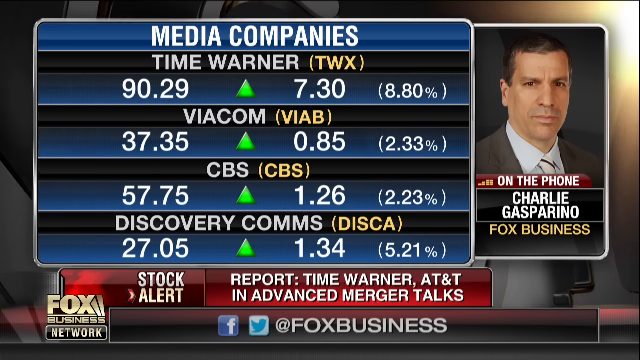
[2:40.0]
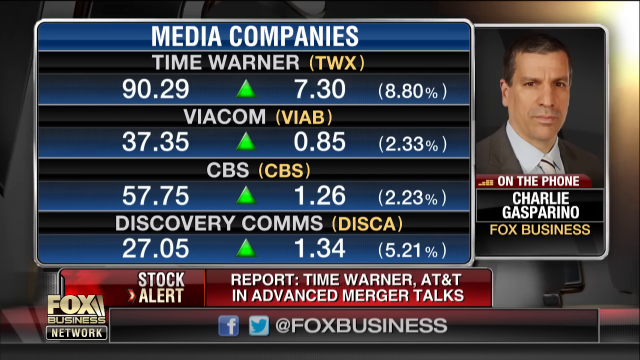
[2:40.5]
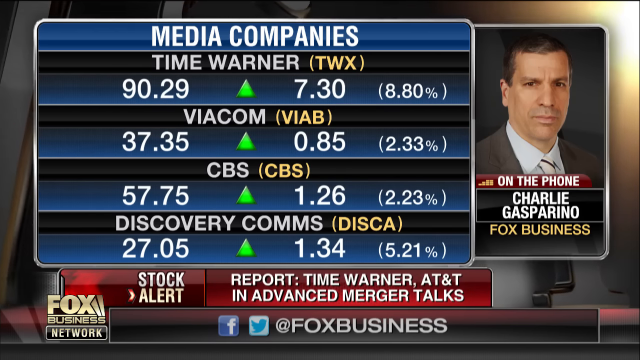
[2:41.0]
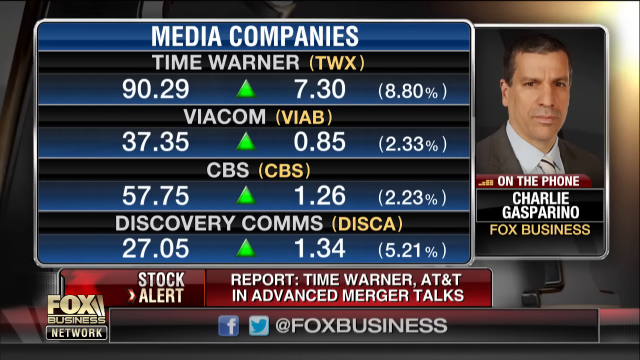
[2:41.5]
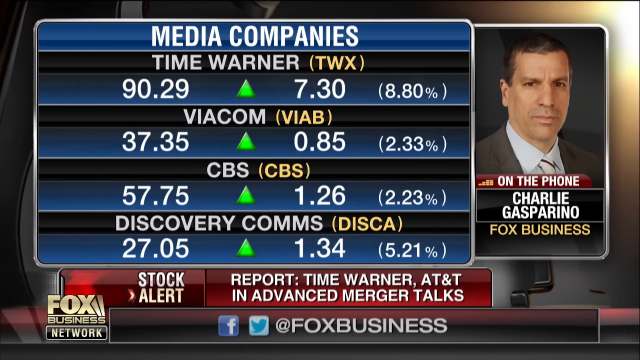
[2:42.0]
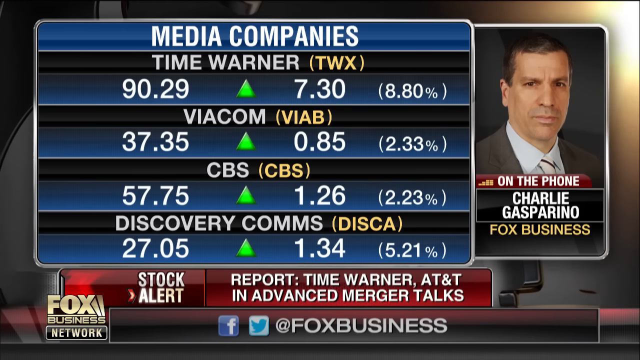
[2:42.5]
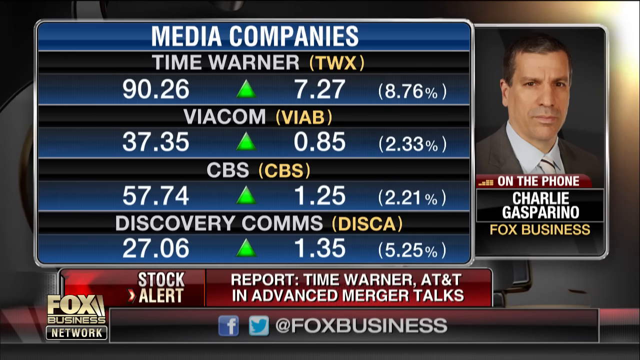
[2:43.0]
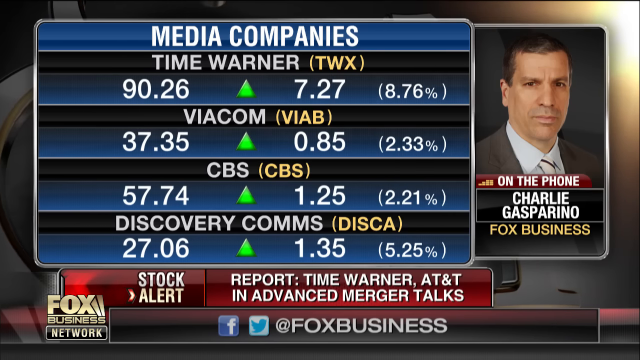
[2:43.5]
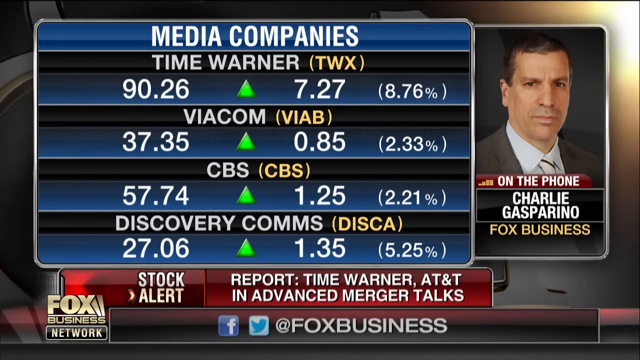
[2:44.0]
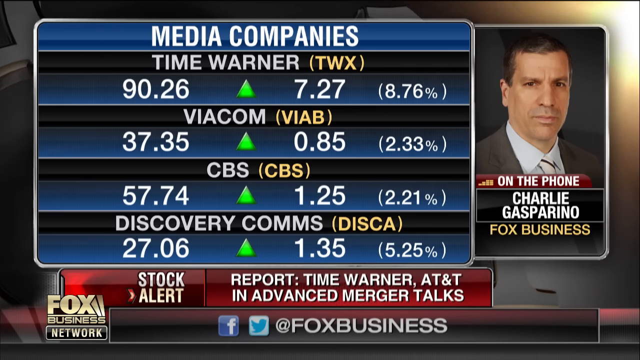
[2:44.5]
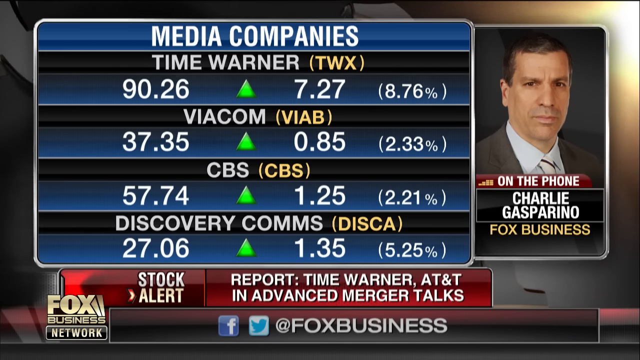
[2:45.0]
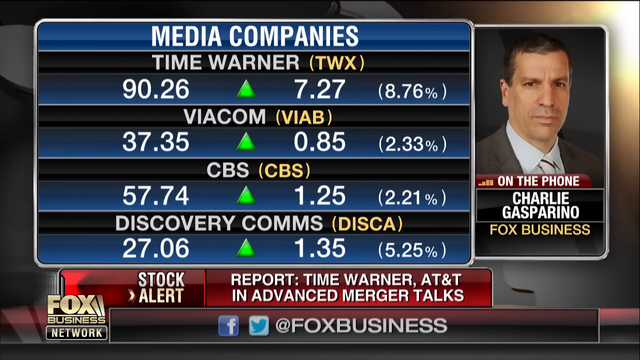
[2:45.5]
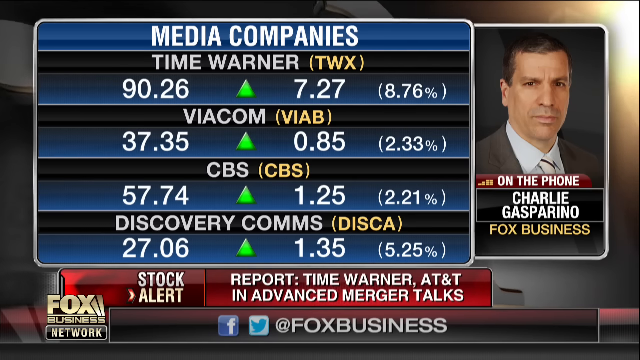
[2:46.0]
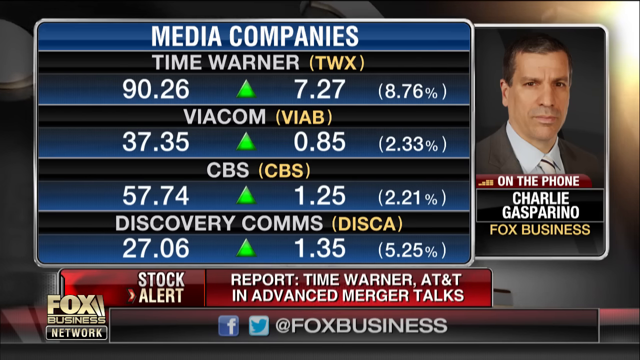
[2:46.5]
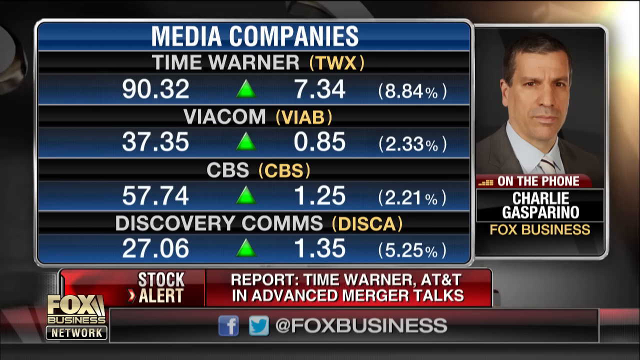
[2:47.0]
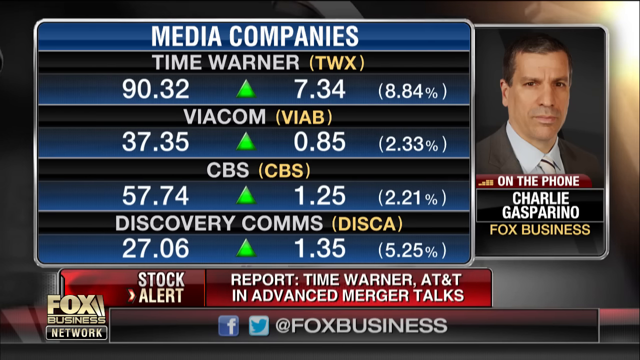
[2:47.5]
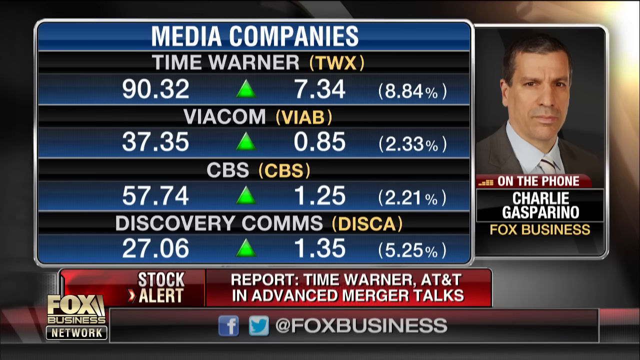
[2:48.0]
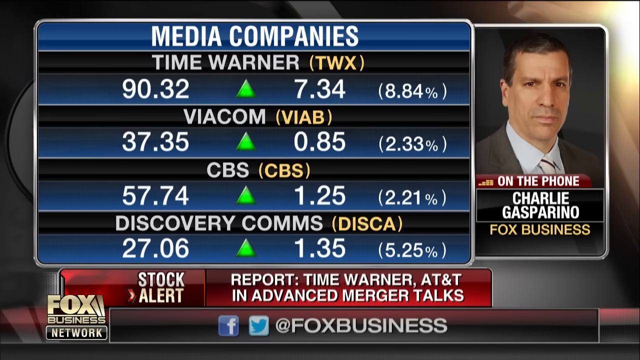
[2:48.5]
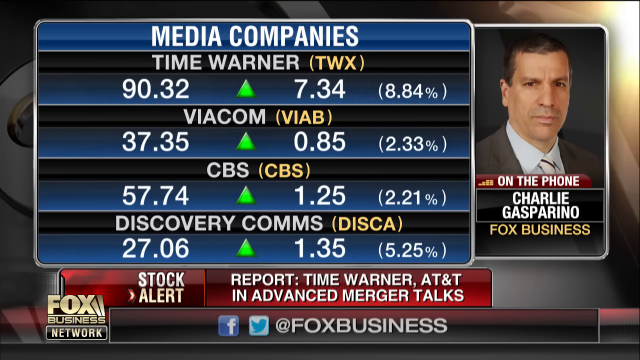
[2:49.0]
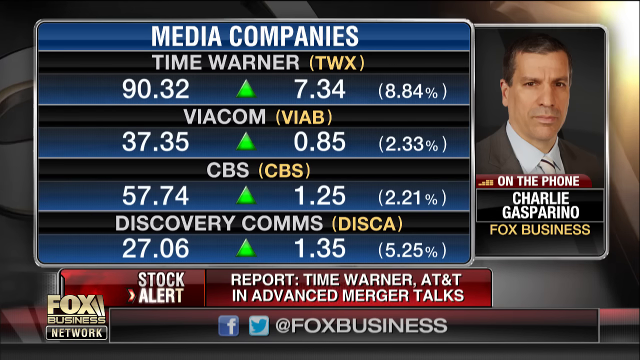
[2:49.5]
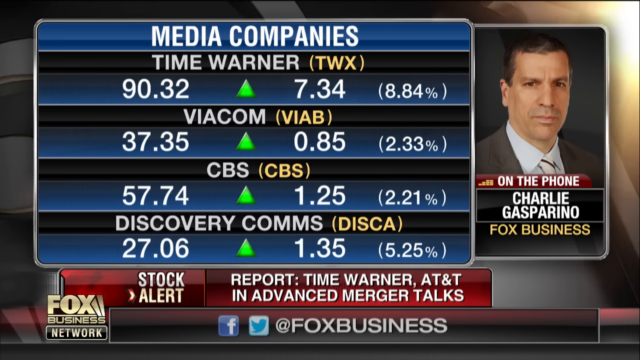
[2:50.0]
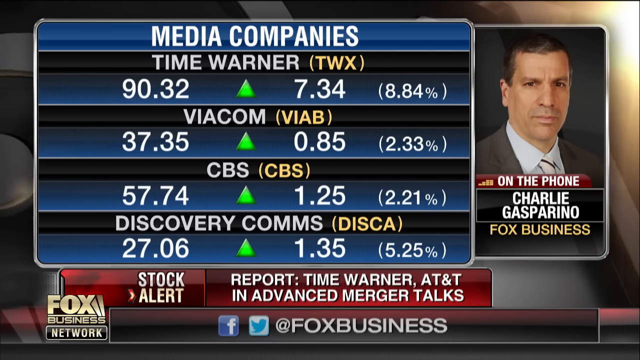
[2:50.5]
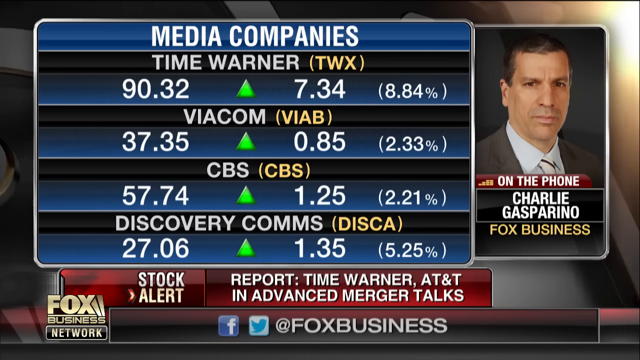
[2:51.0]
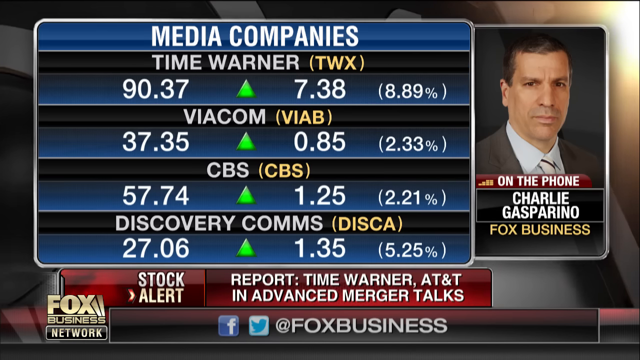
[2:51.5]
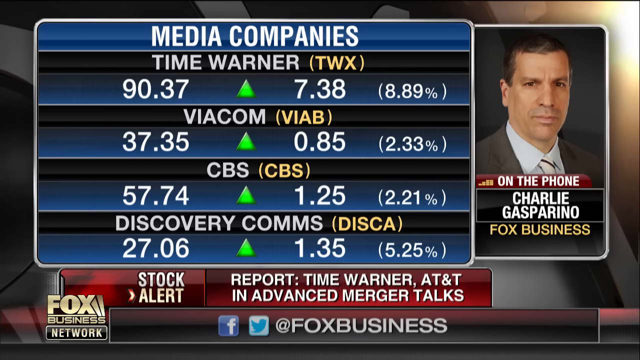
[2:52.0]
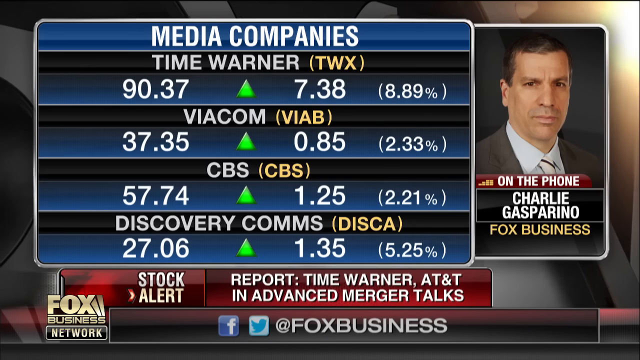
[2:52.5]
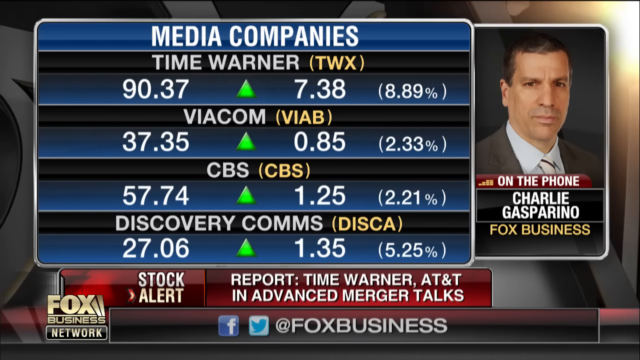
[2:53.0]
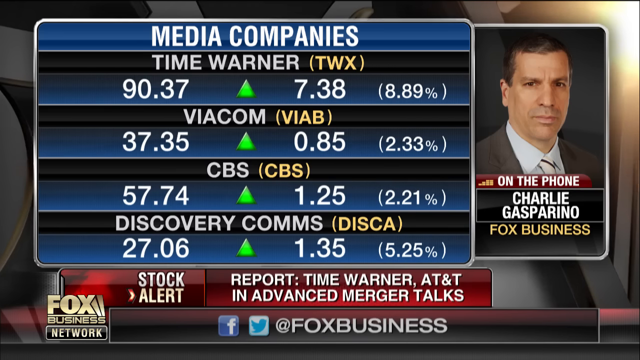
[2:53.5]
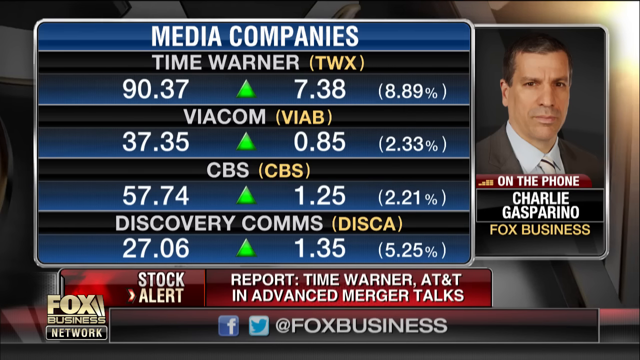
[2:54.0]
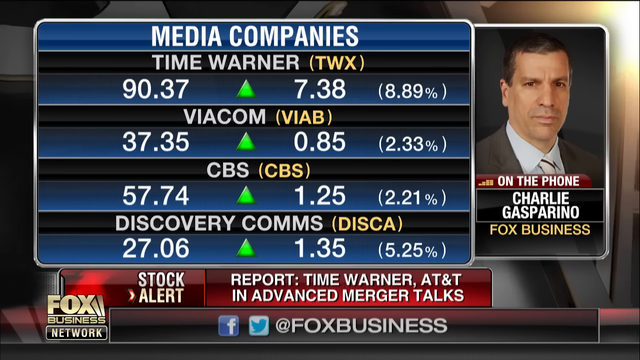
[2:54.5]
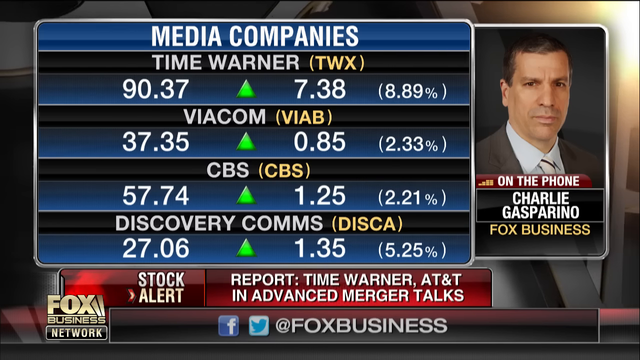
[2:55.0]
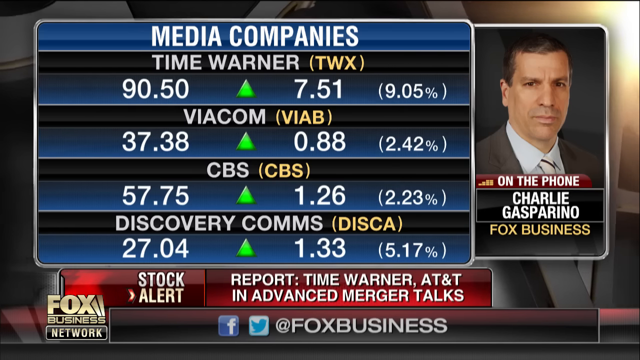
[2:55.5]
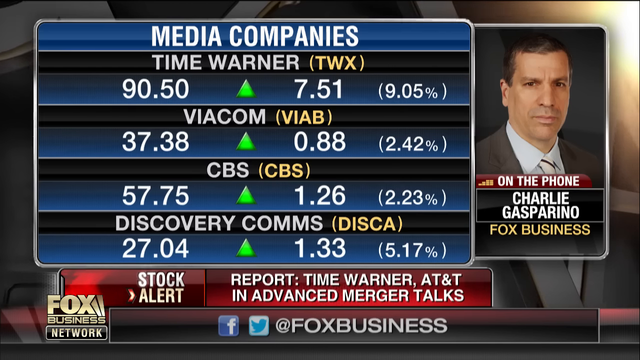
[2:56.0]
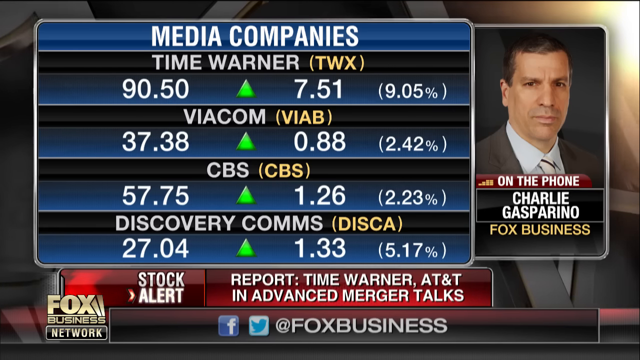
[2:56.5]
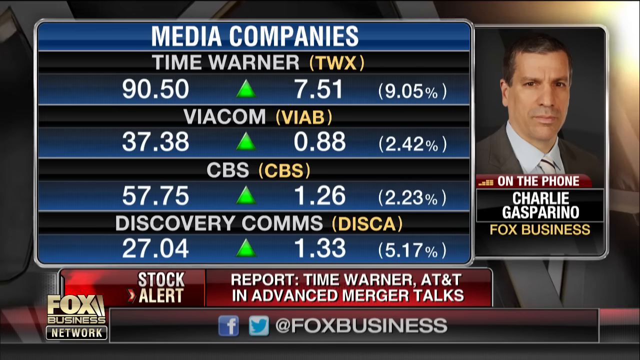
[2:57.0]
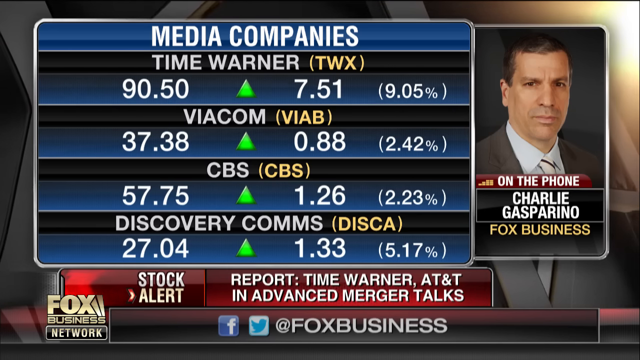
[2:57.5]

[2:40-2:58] The letters in the back continue to rotate, and "stock alert" on the upper news ticker in the lower part of the screen glistens. The media company numbers show Time Warner 90.26, up 7.27, 8.76%; Viacom 37.35, up 0.85, 2.33%; CBS 57.74, up 1.25, 2.21%; Discovery Comms 27.606, up 1.35, 5.25%. Time Warner then changes to 90.32, up 7.34, 8.84%, and "stock alert" glistens. Time Warner changes to 90.37, up 7.38, 8.89%. The letters in the back continue to rotate, and the numbers change to Time Warner 90.50, up 7.51, 9.05%; Viacom 37.38, up 0.88, 2.42%; CBS 57.75, up 1.26, 2.23%; Discovery Comms 27.04, up 1.33, 5.17%. "Stock alert" in the upper news ticker glistens.